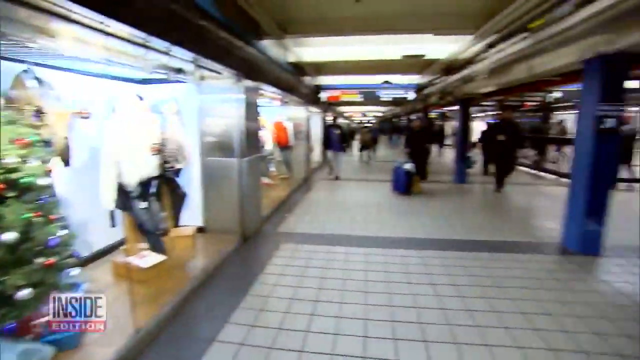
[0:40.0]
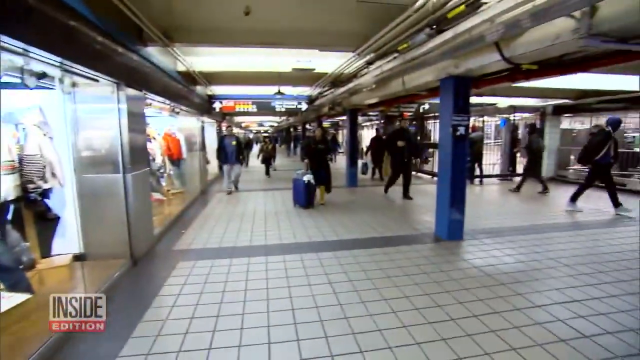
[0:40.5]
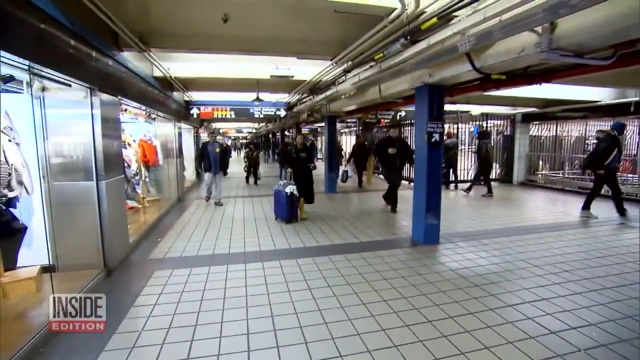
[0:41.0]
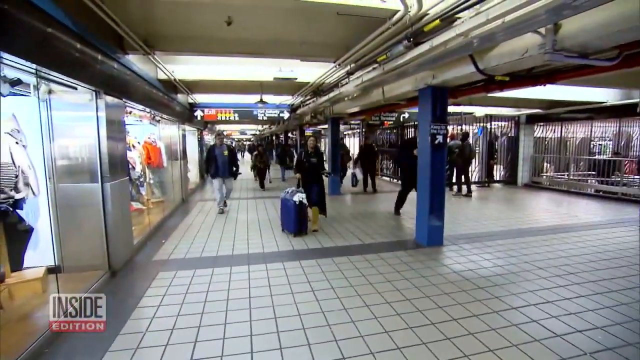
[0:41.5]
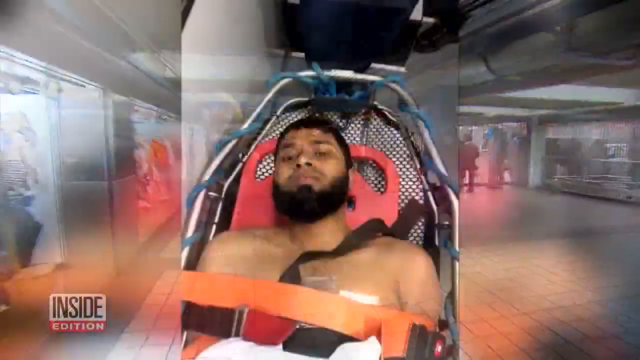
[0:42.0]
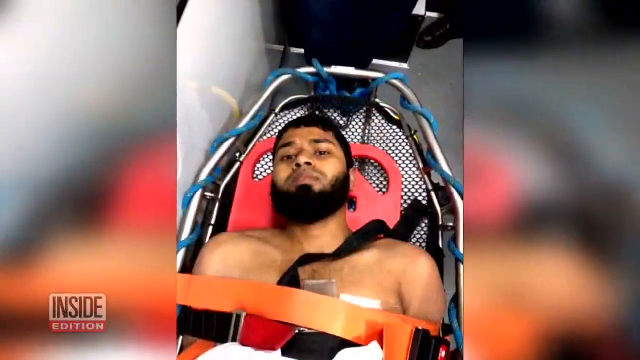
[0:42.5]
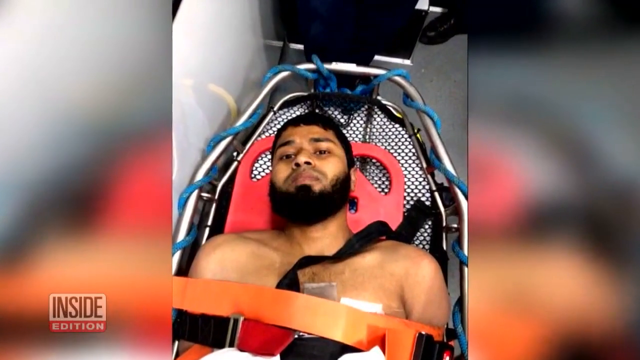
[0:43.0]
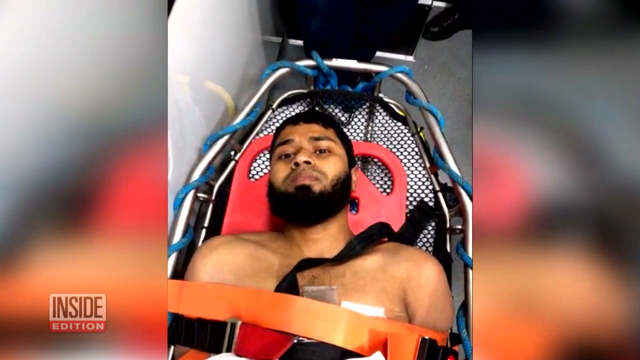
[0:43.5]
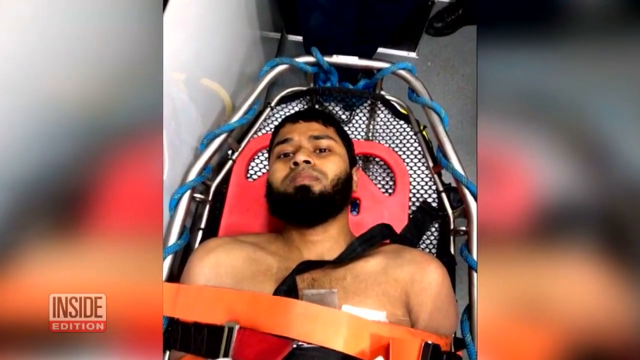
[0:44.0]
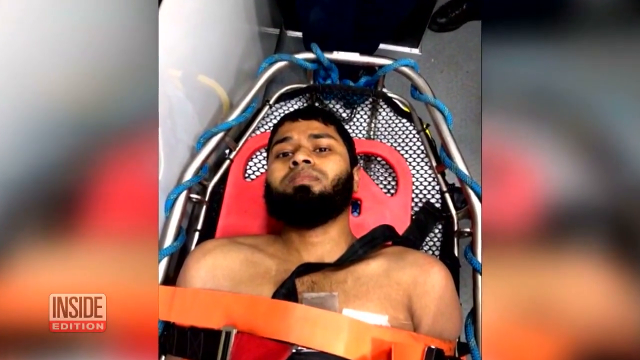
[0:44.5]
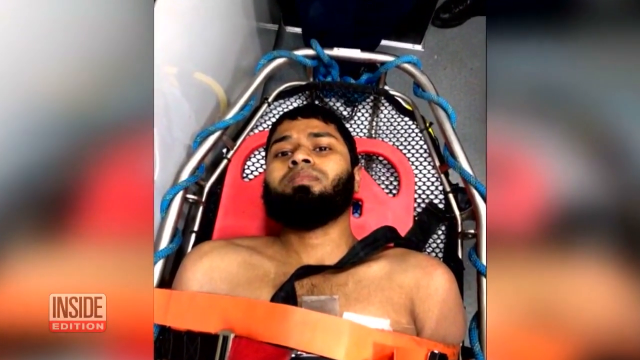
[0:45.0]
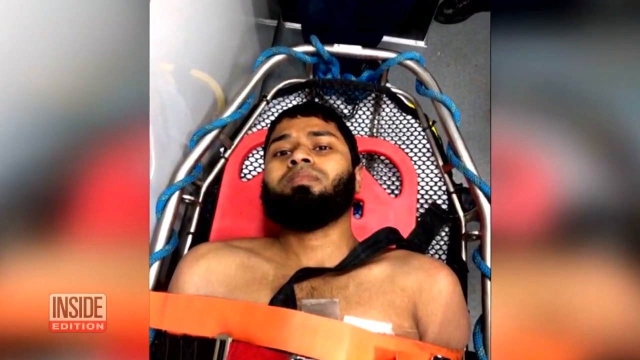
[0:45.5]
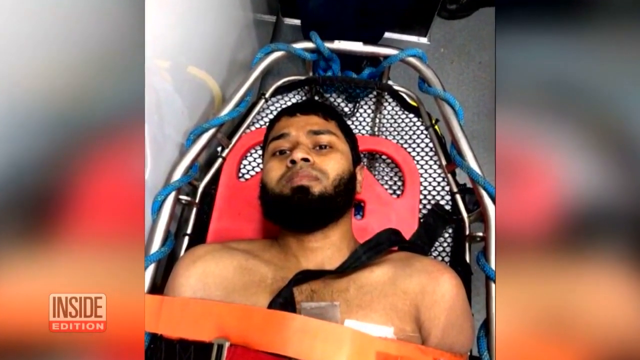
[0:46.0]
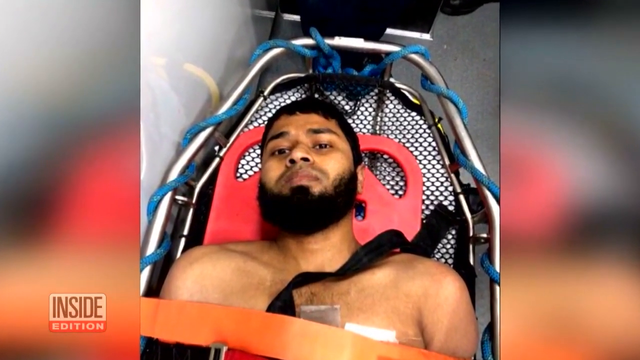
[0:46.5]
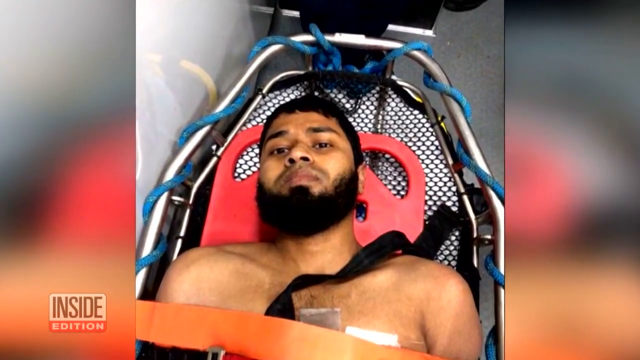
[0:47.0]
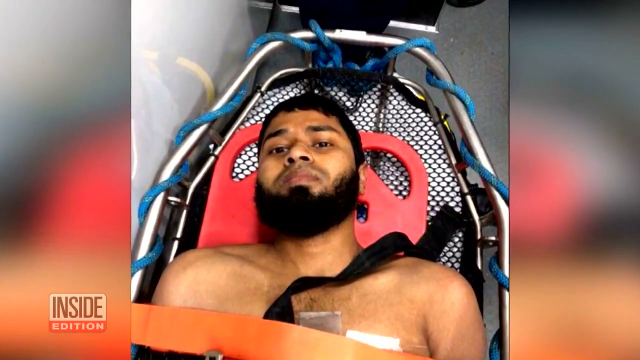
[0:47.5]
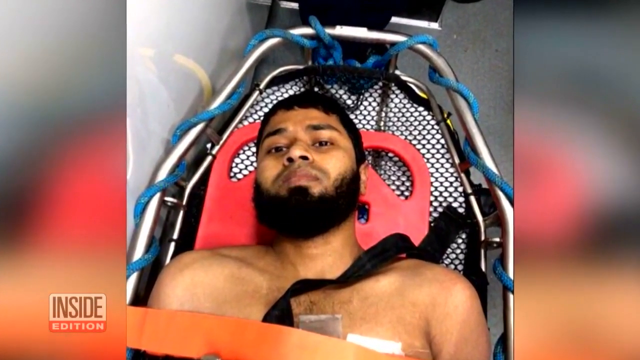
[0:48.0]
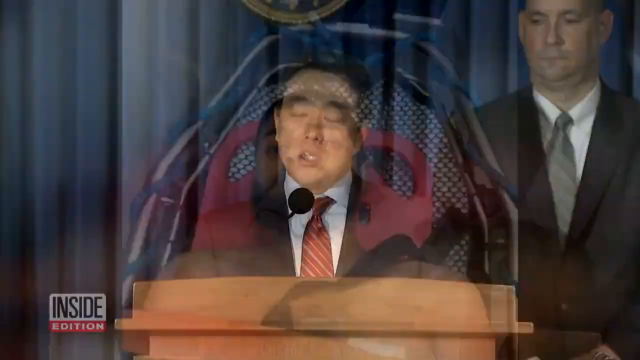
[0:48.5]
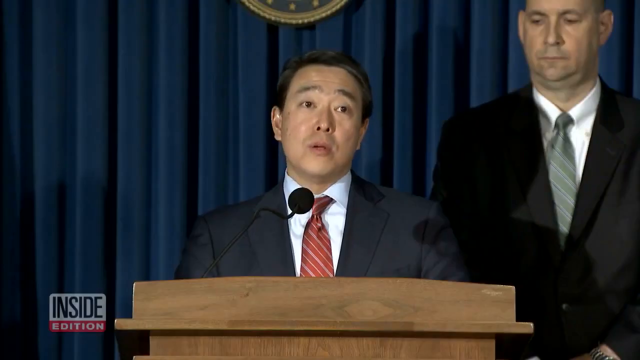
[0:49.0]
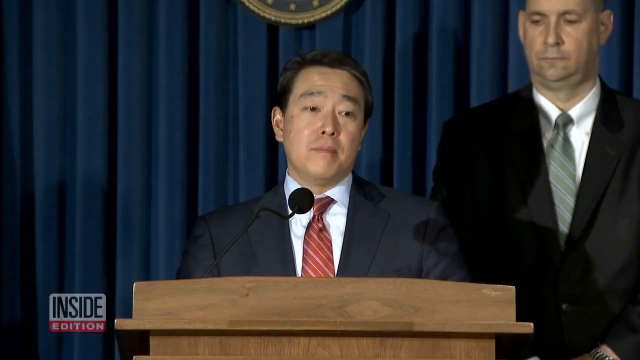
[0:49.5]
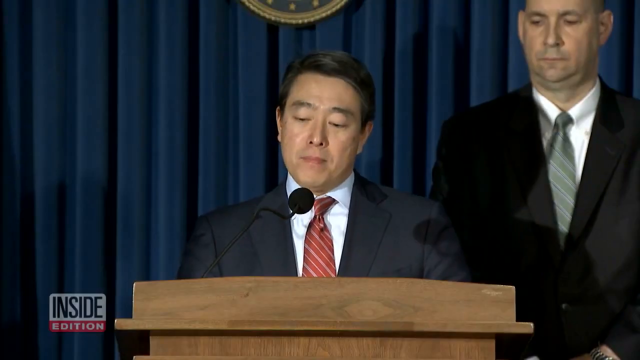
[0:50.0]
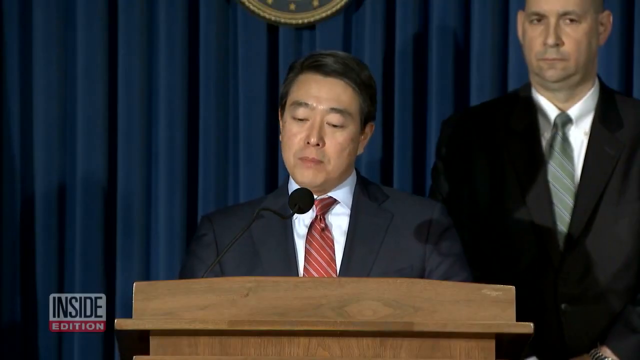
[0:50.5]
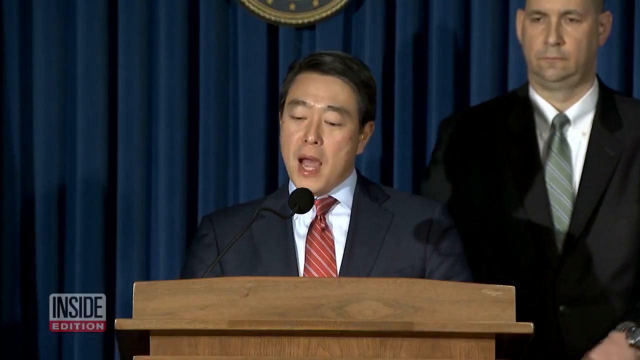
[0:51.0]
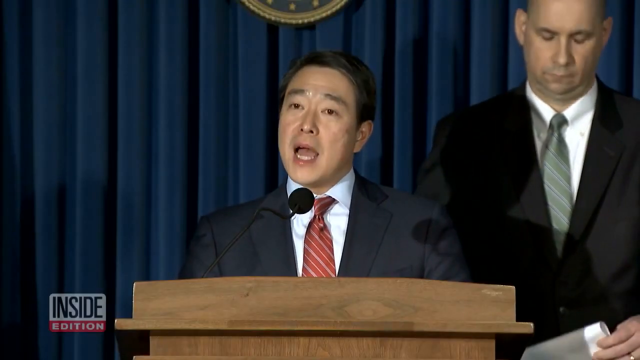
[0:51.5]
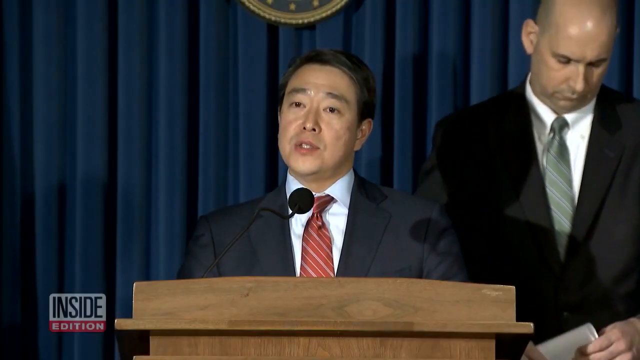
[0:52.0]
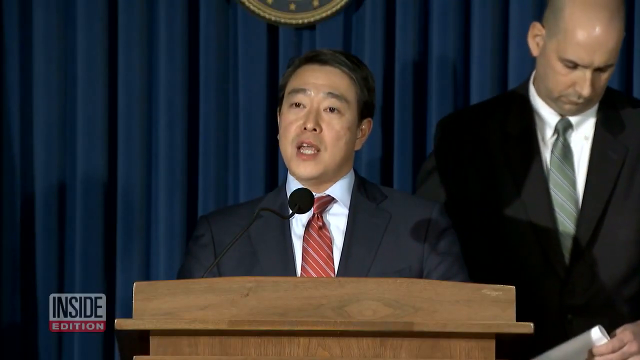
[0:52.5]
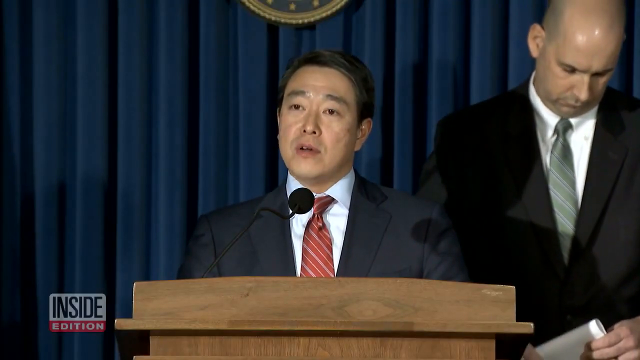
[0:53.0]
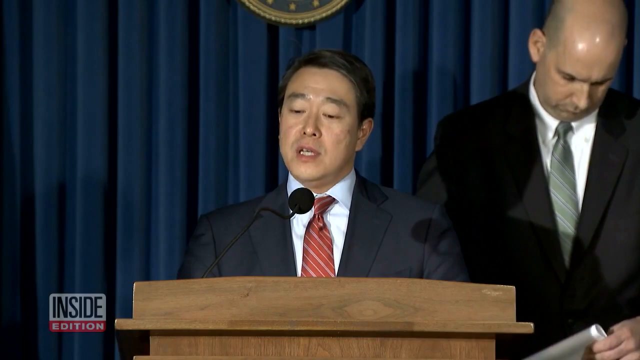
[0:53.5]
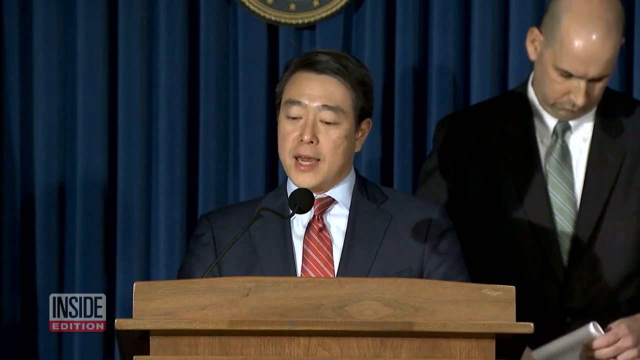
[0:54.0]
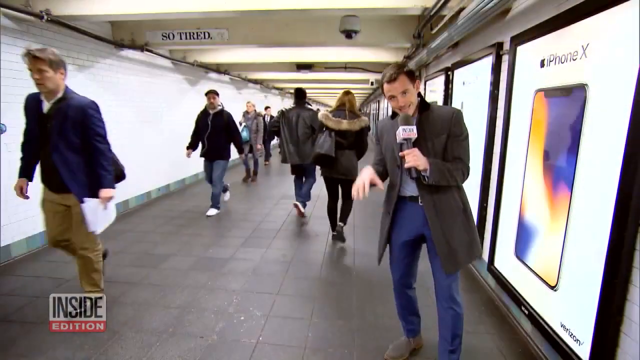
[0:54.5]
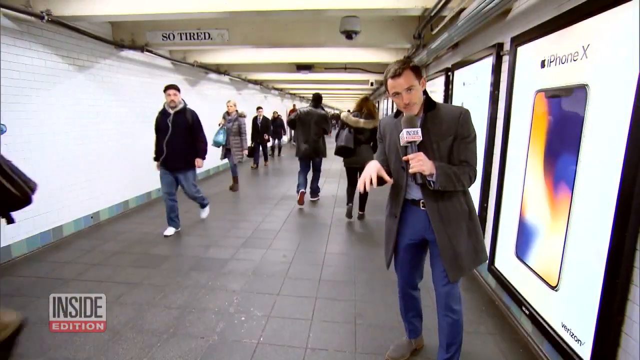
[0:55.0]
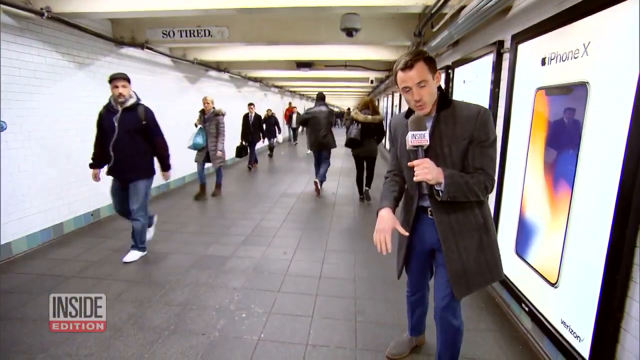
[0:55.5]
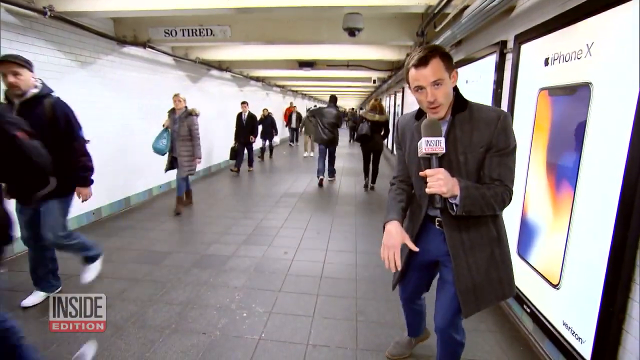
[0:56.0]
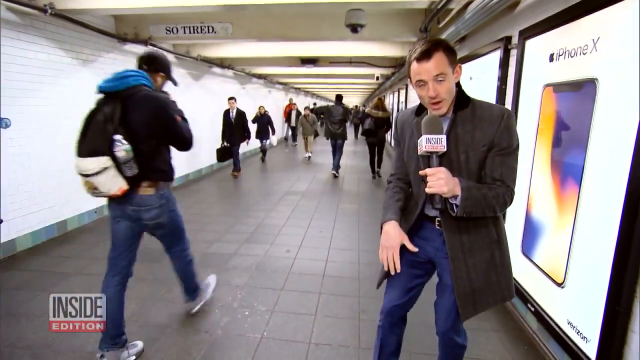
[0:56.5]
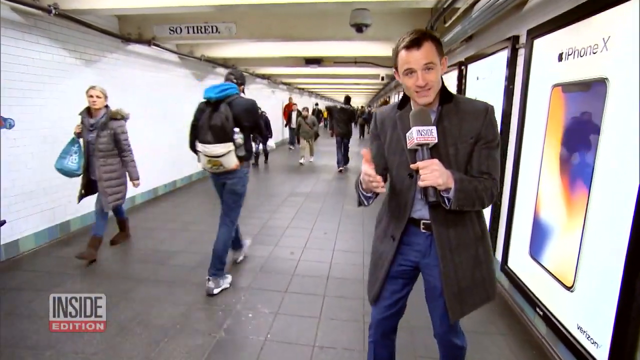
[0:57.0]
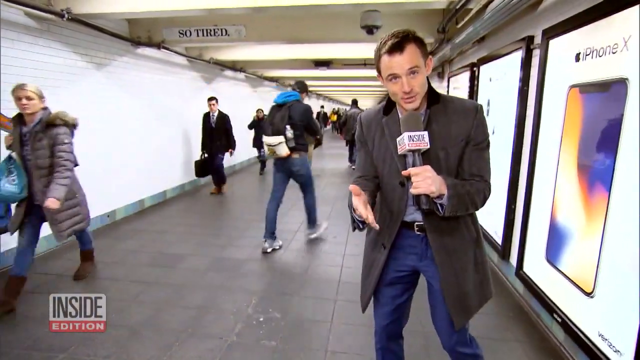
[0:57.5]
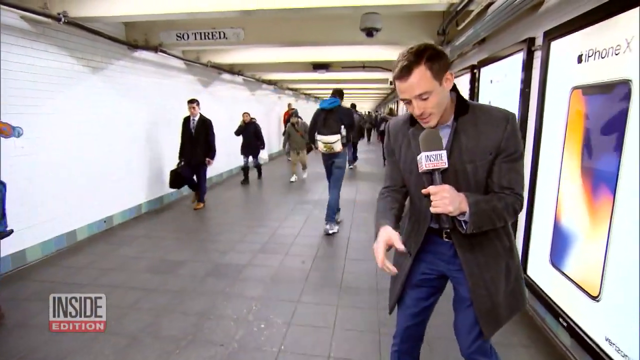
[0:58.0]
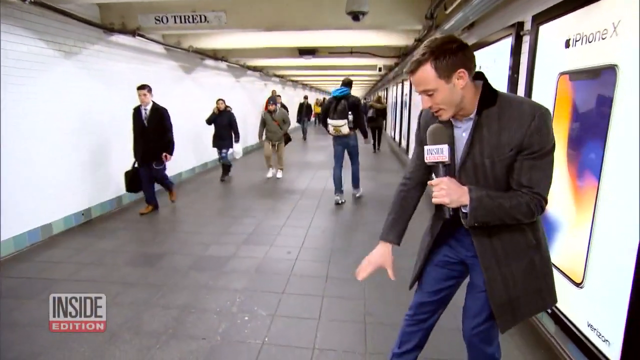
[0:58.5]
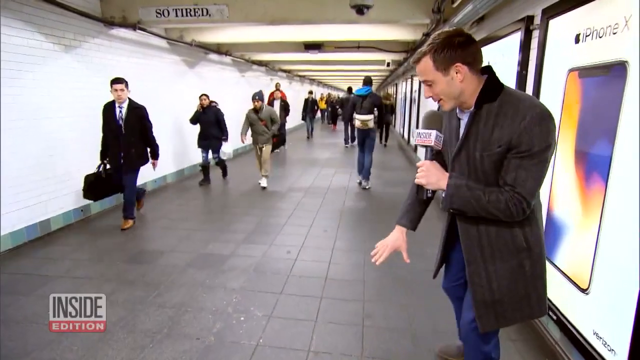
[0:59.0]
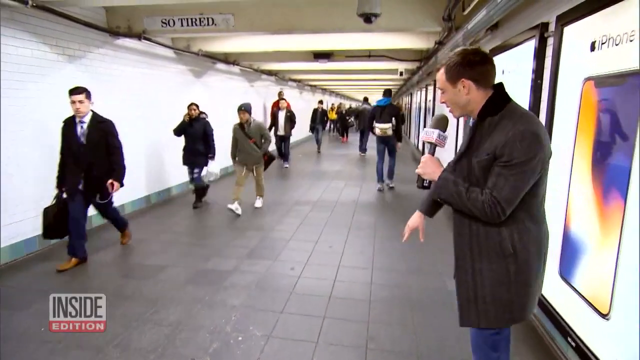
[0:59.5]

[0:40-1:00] A number of people walk through the bus terminal, some carrying briefcases, suitcases and bags, and they all seem to be moving quickly. Then a photograph is shown, slightly animated so that it moves closer to the viewer. It shows the suspect being put into an ambulance, lying on a red backboard placed on top of a stretcher or gurney. He is a darker-skinned man with black hair and a short black beard, and appears to possibly be of Middle Eastern descent. Orange straps go across his chest. Next, a man of Asian descent in a suit and tie speaks, perhaps to the press, from behind a wooden podium; he seems to have some authority to speak on the case. Then a man from Inside Edition holding a microphone, wearing jeans and a long gray coat, stands inside the bus terminal.